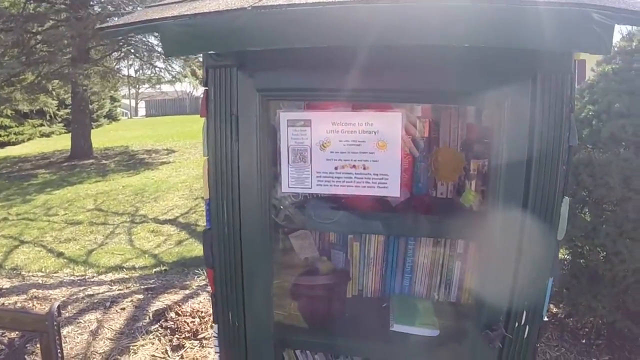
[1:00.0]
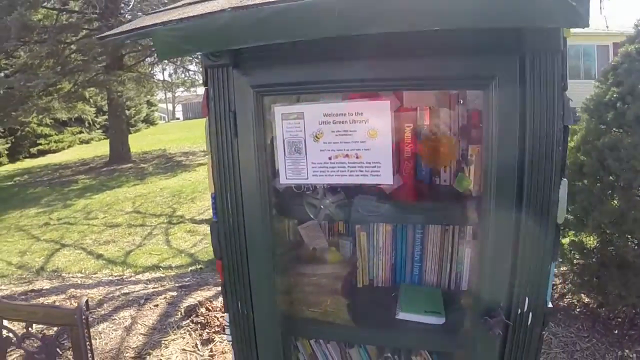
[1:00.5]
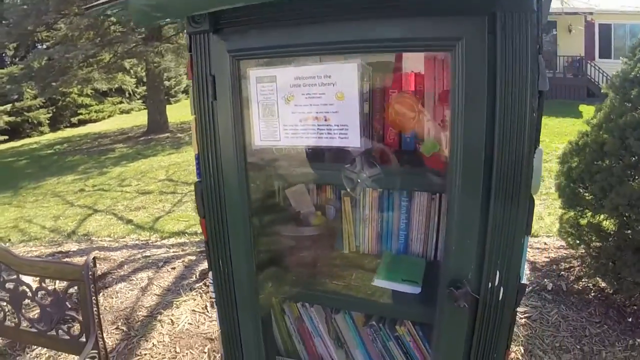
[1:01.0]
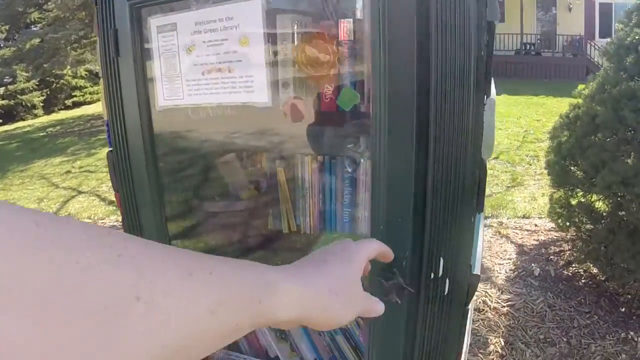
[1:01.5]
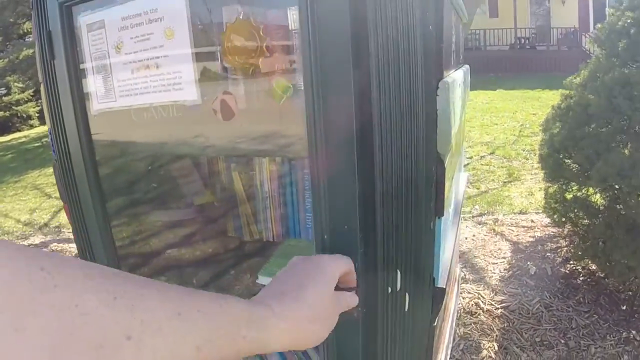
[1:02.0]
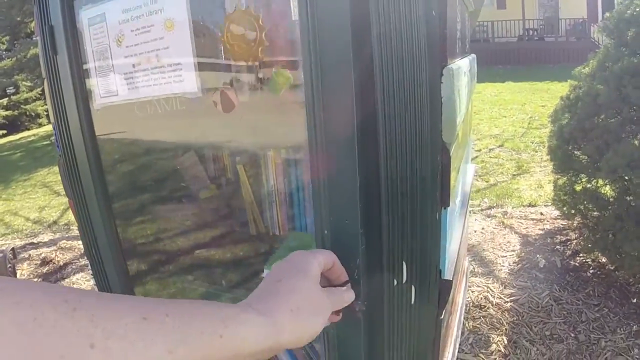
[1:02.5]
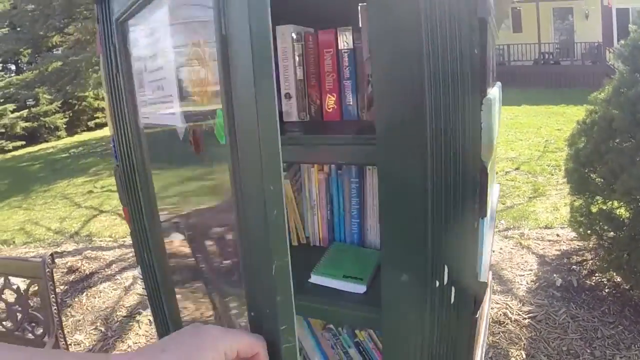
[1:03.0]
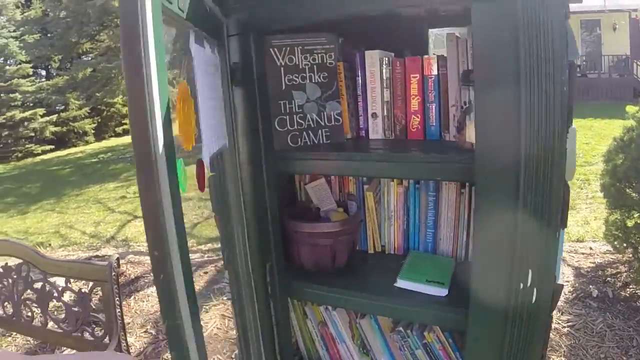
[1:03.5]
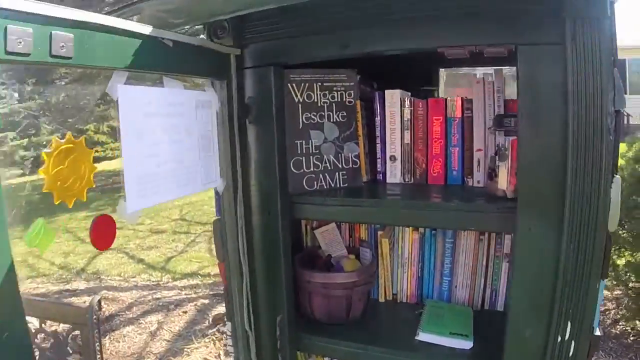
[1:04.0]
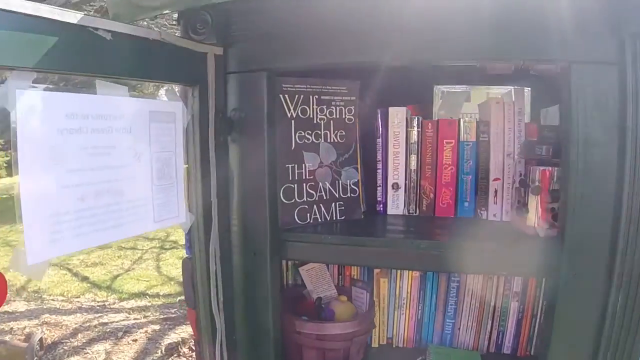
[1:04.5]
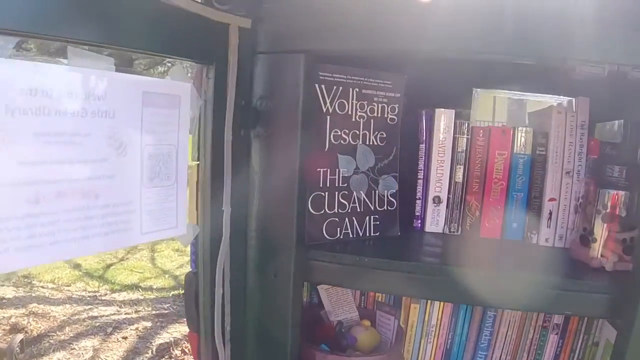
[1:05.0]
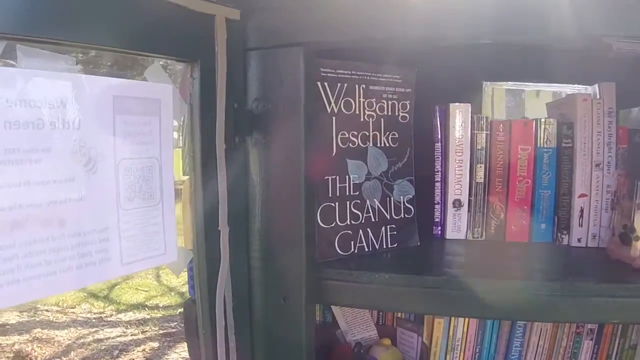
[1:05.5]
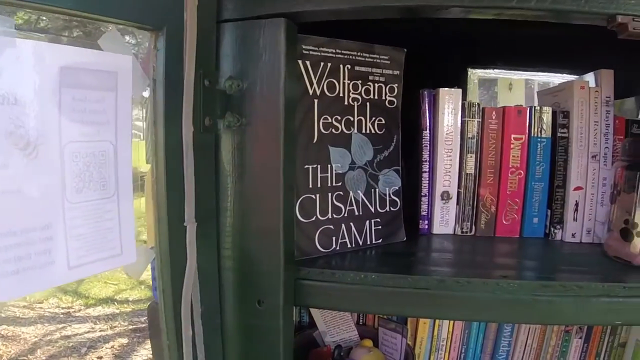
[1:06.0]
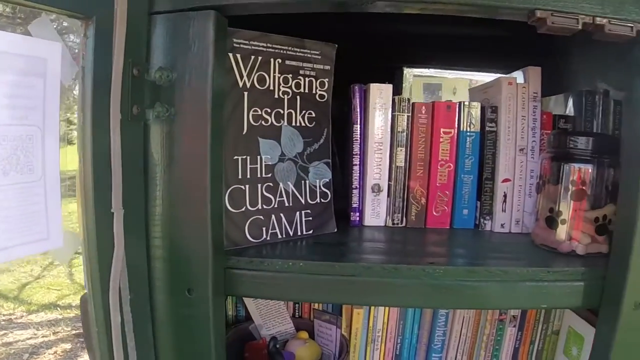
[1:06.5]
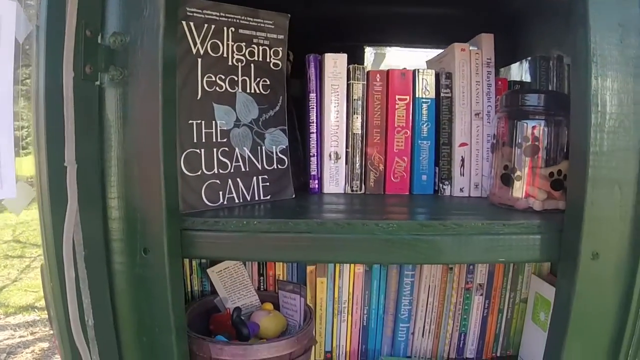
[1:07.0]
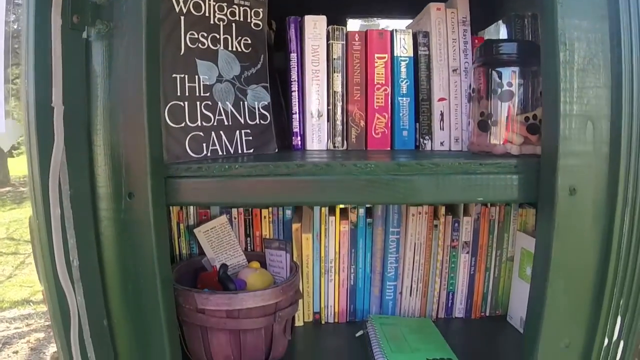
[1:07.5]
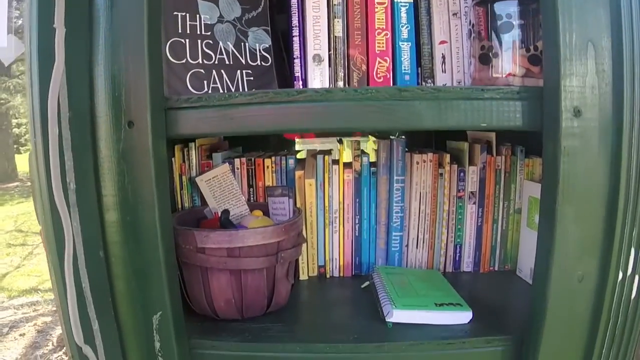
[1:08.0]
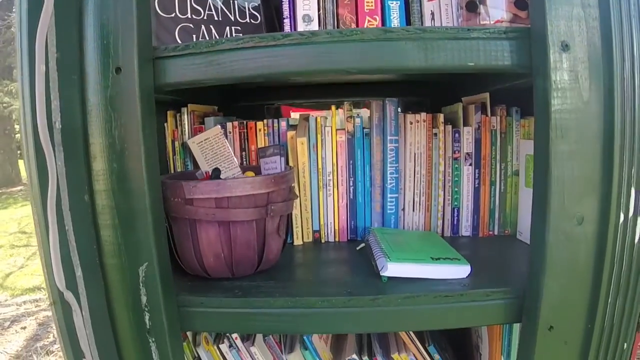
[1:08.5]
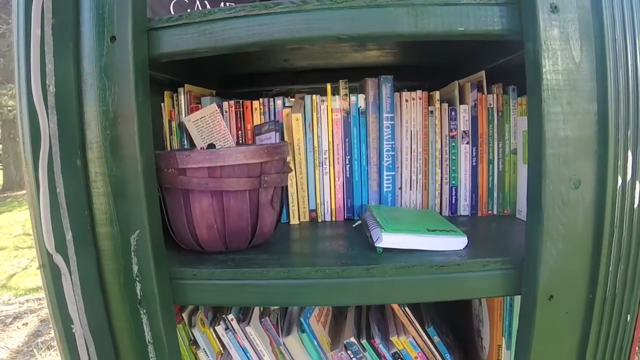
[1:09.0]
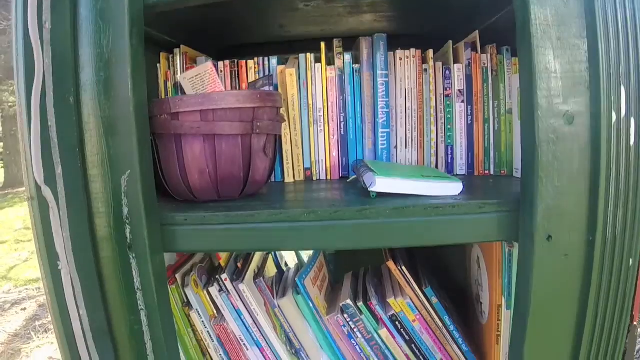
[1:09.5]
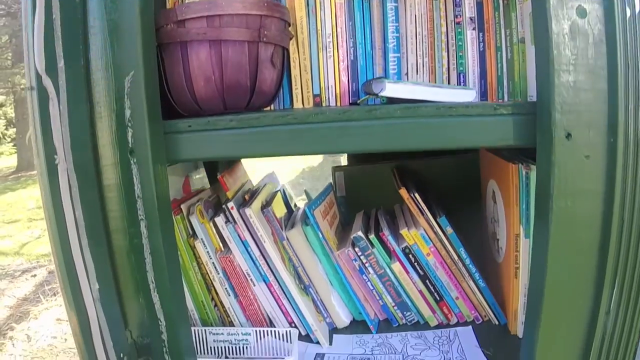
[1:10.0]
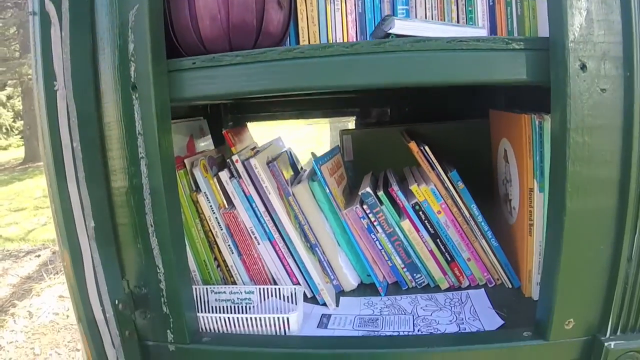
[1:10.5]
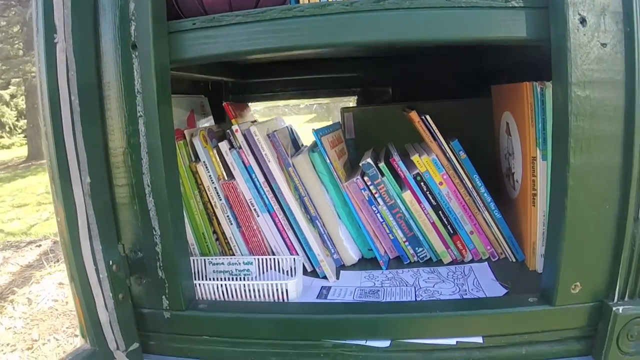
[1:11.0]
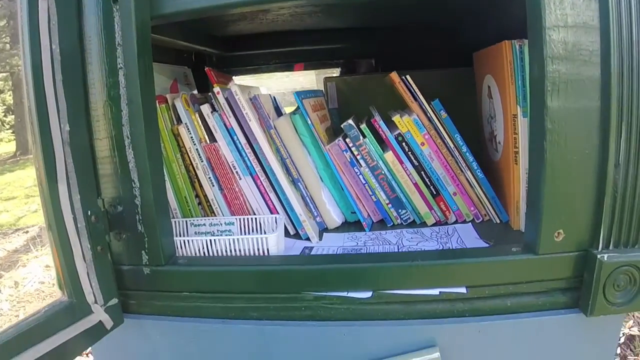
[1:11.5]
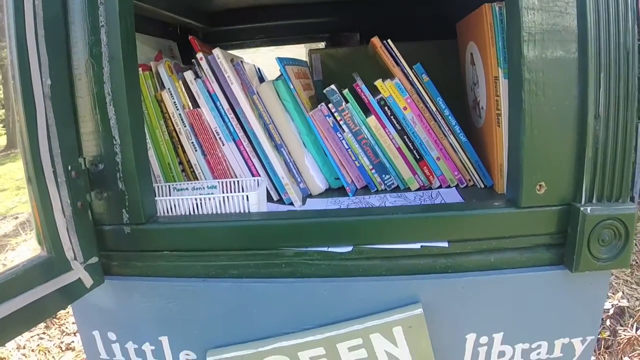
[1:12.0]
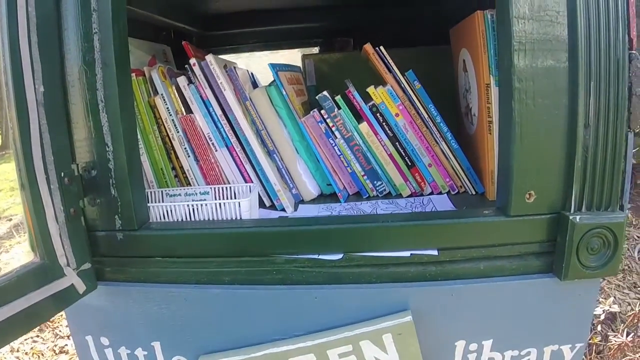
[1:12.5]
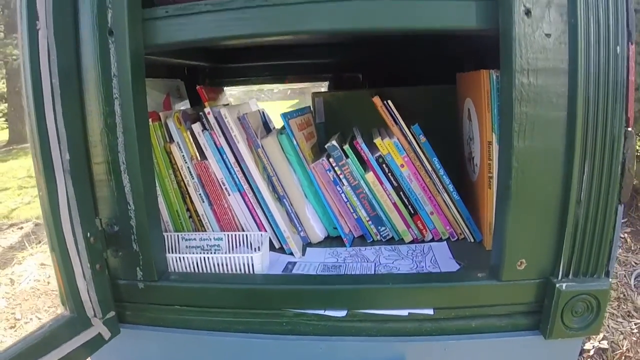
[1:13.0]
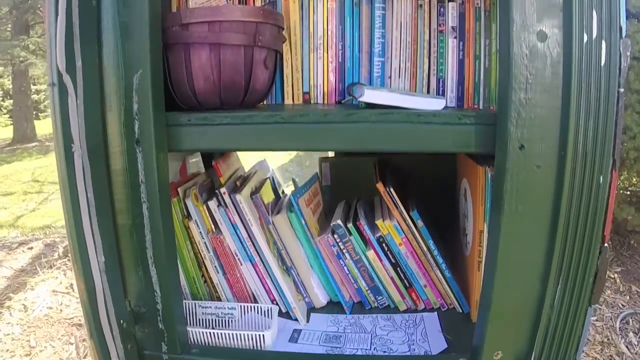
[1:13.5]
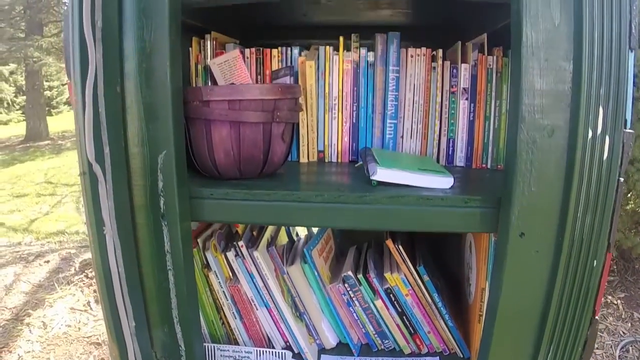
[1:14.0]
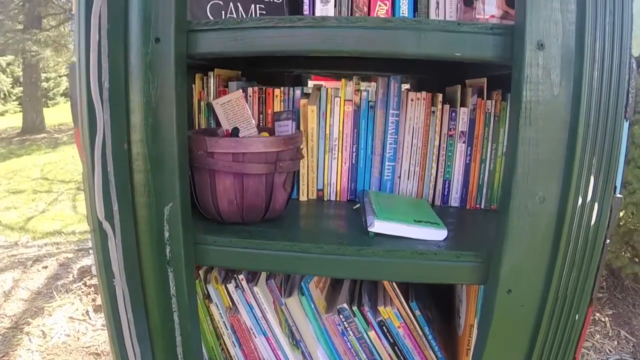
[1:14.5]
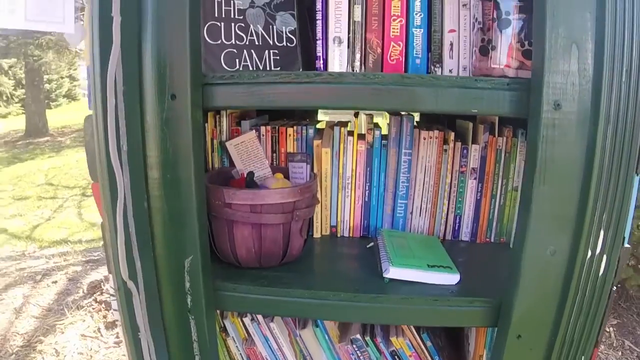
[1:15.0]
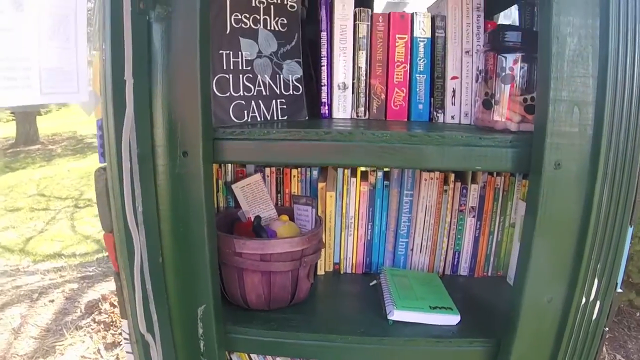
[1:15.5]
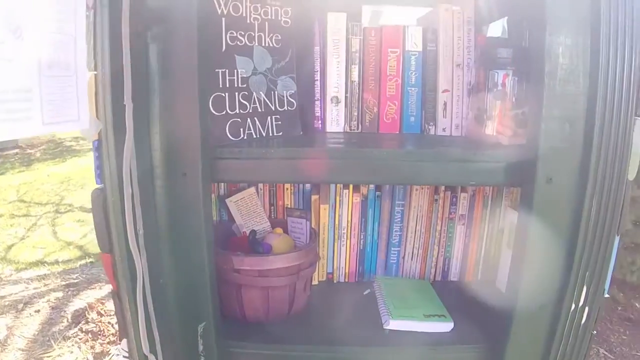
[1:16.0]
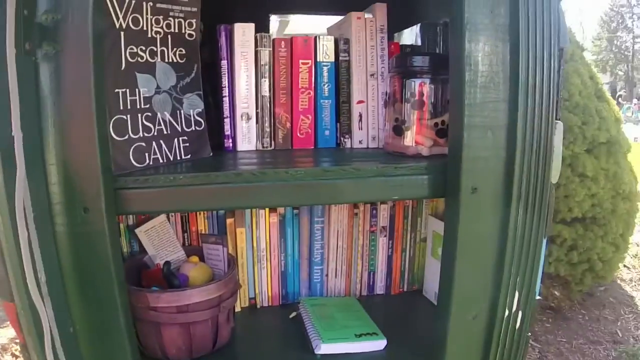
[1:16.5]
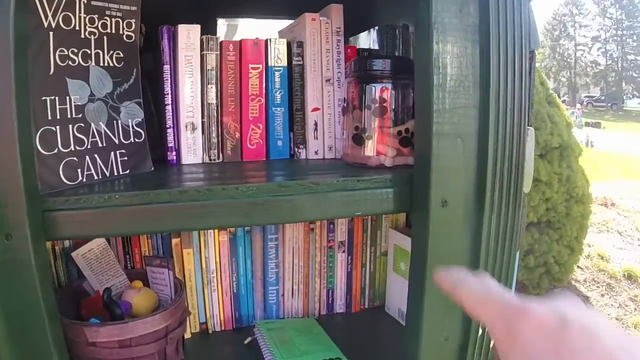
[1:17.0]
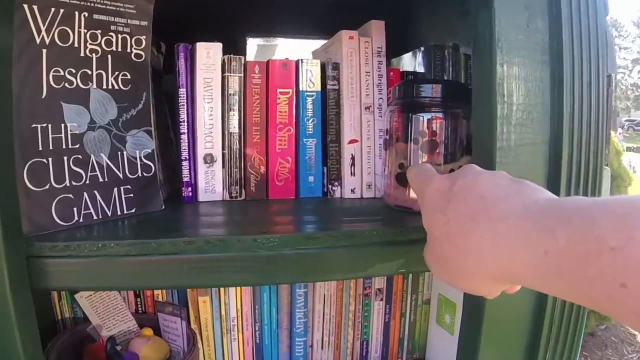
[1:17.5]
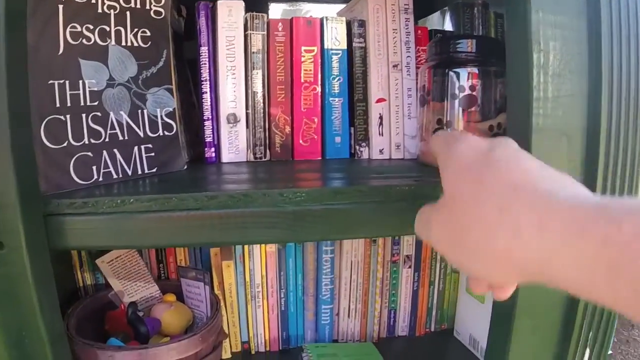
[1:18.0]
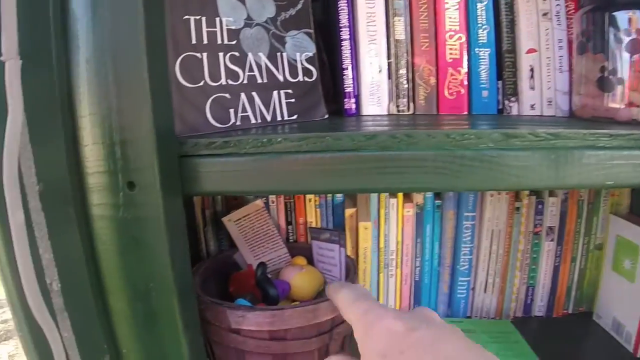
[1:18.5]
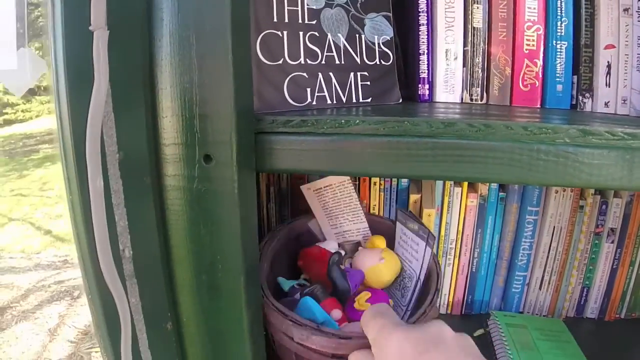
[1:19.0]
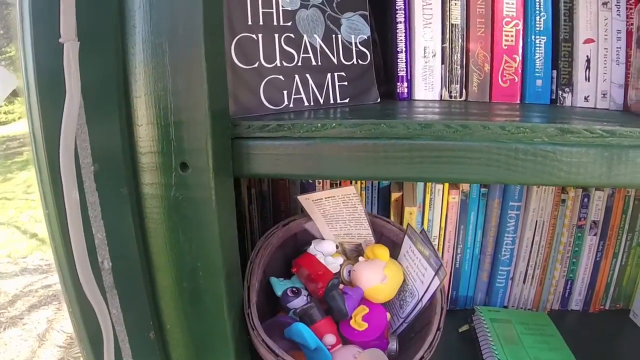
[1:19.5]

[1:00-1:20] The man is back, though only his hand is seen. The camera gets a close-up of the book nook as he opens it, then pans from top to bottom over three shelves that all look full of books, including a Daniel Steele book. He points out a couple of other things besides books, such as a basket full of toys that someone left. The camera pans back up to the top shelf as he indicates the little toys and baskets. The shelves are very well stacked.